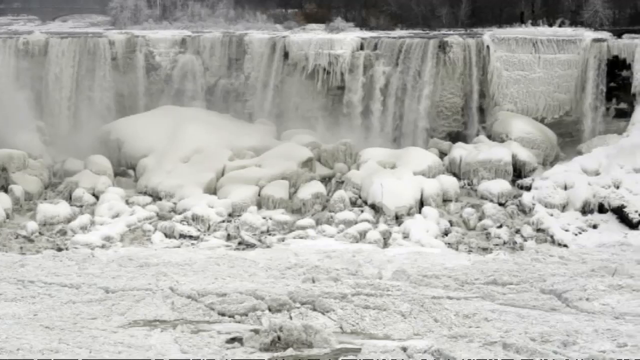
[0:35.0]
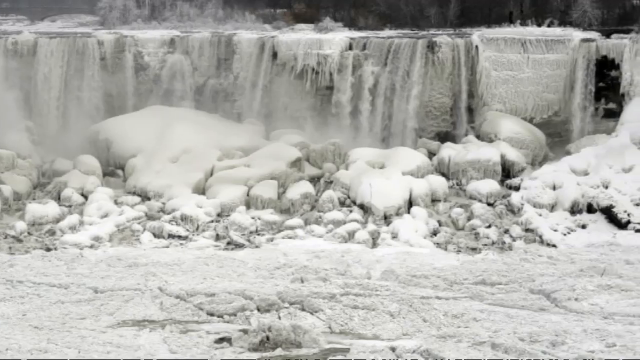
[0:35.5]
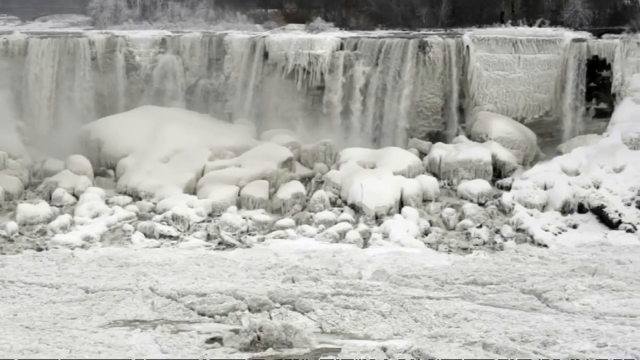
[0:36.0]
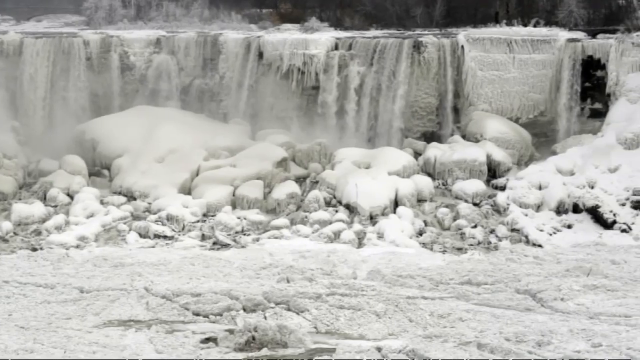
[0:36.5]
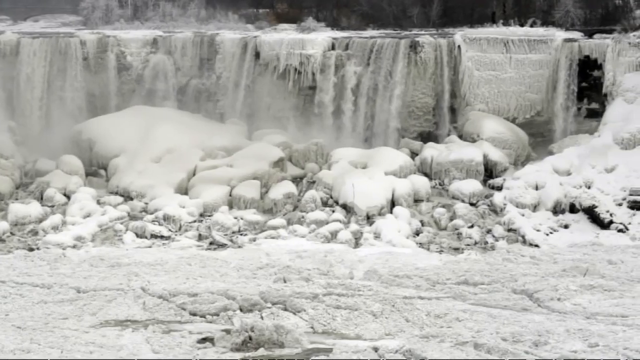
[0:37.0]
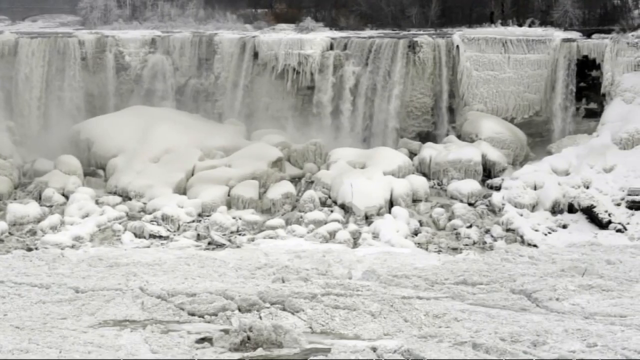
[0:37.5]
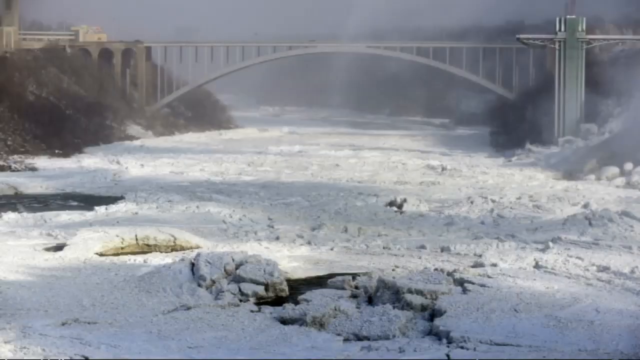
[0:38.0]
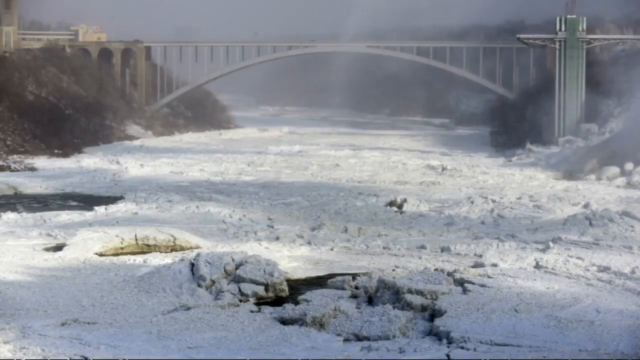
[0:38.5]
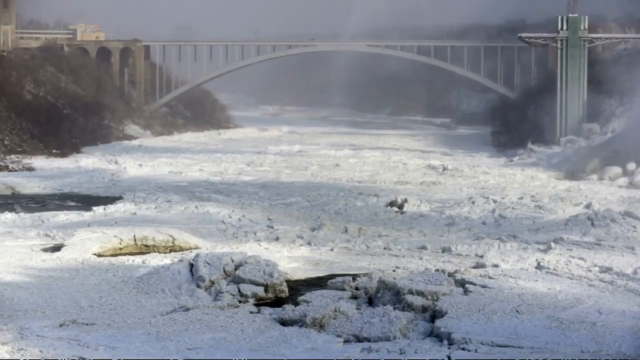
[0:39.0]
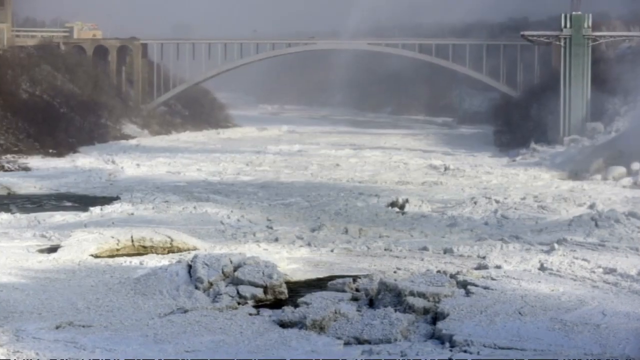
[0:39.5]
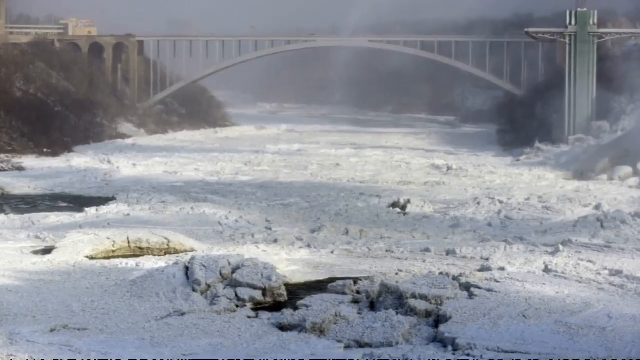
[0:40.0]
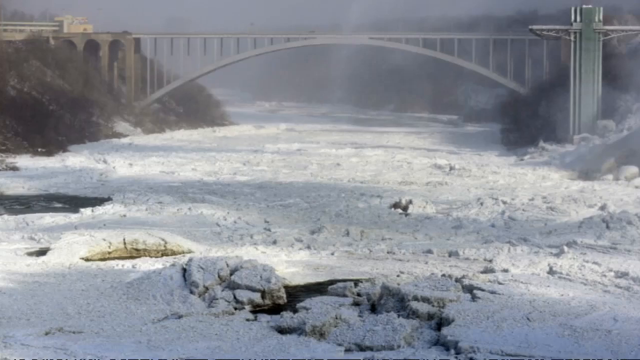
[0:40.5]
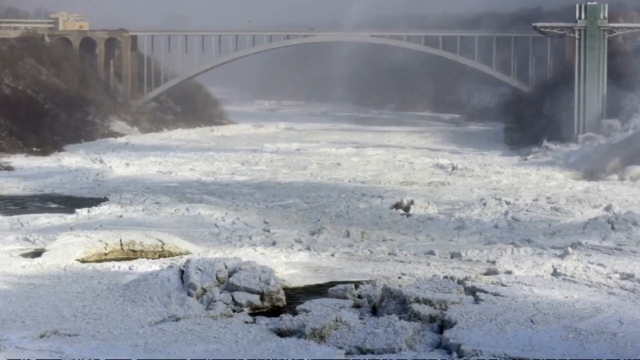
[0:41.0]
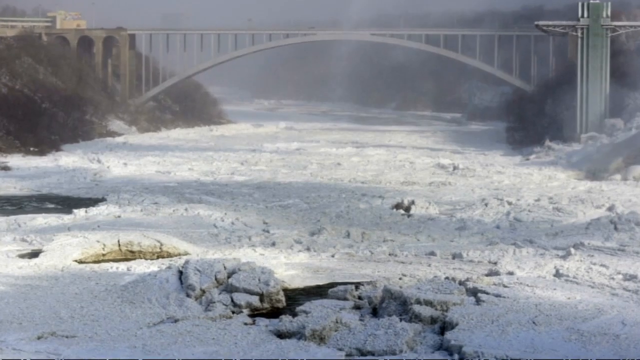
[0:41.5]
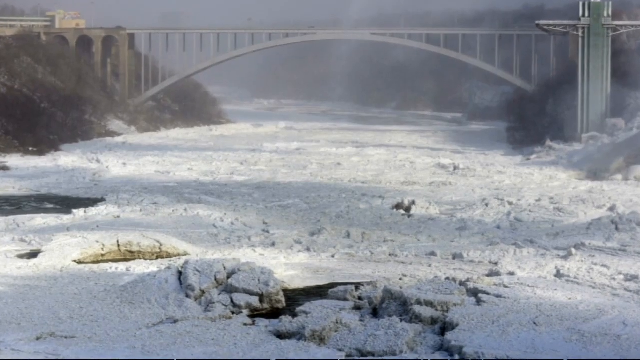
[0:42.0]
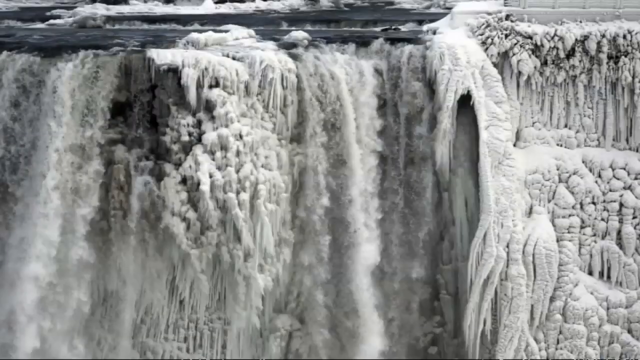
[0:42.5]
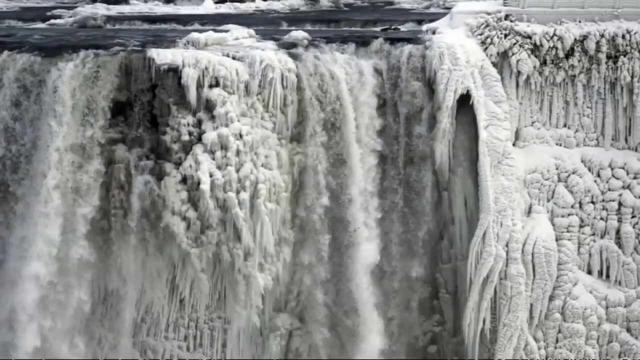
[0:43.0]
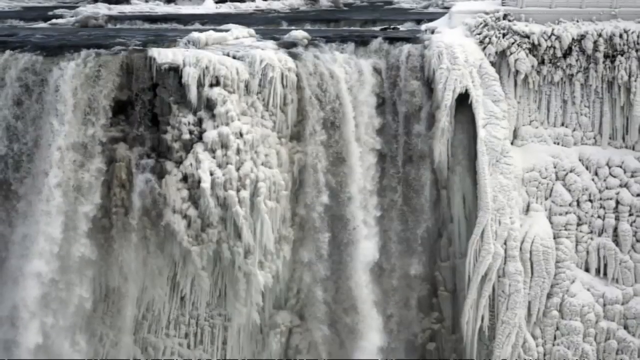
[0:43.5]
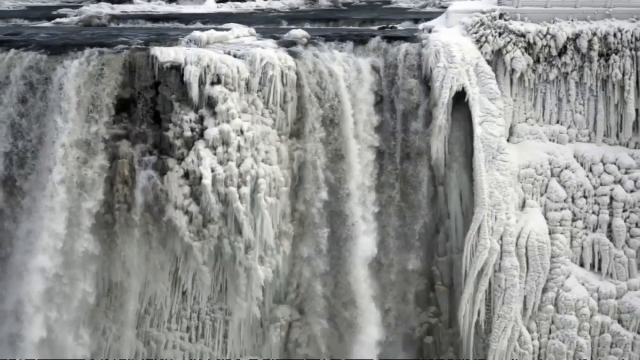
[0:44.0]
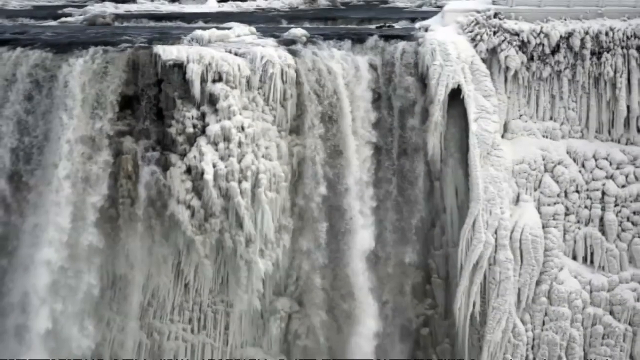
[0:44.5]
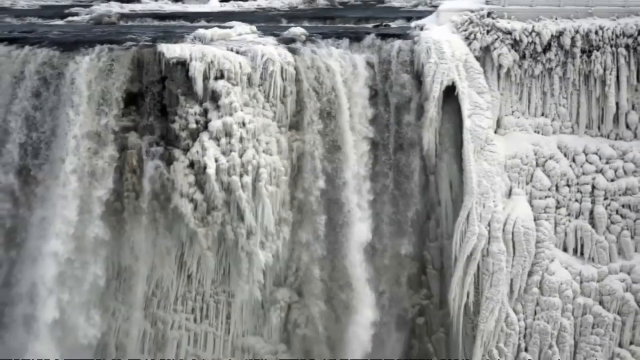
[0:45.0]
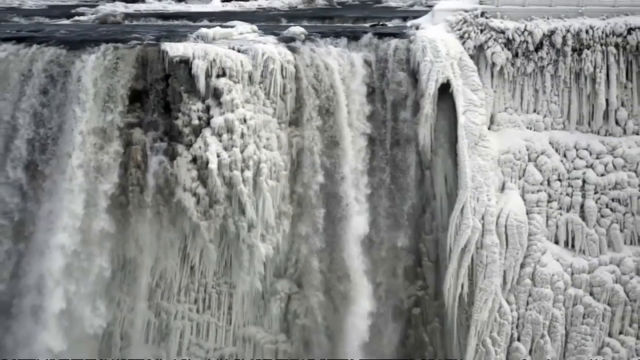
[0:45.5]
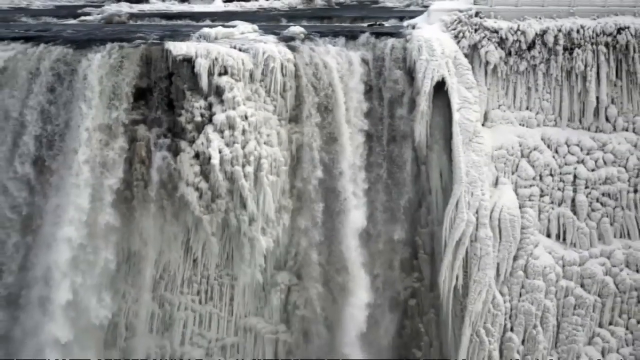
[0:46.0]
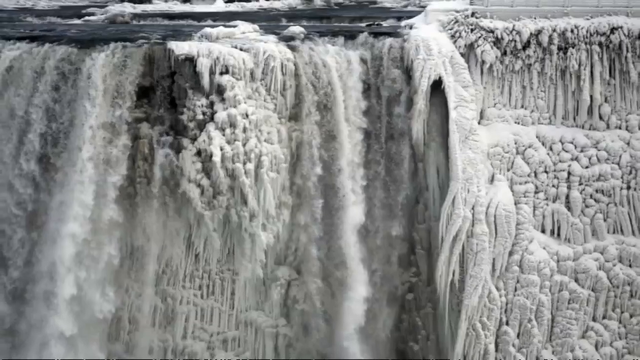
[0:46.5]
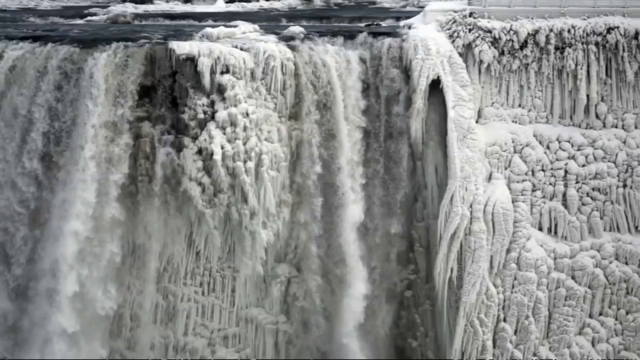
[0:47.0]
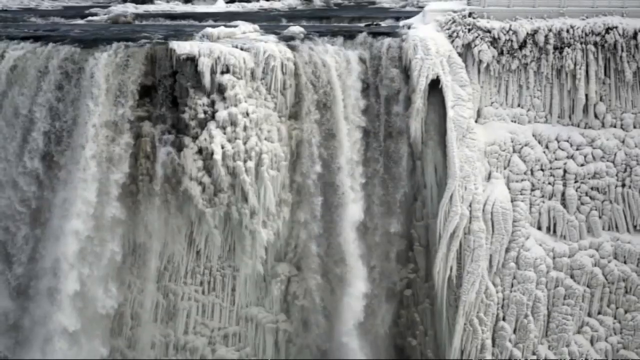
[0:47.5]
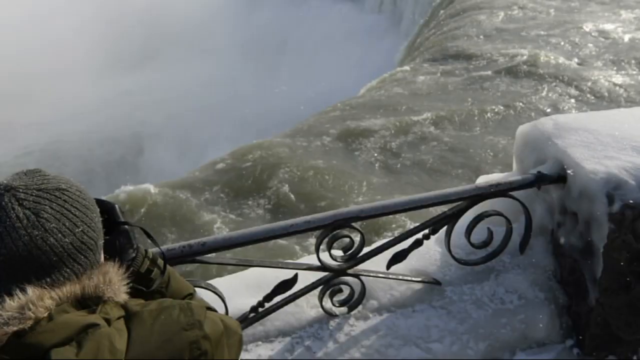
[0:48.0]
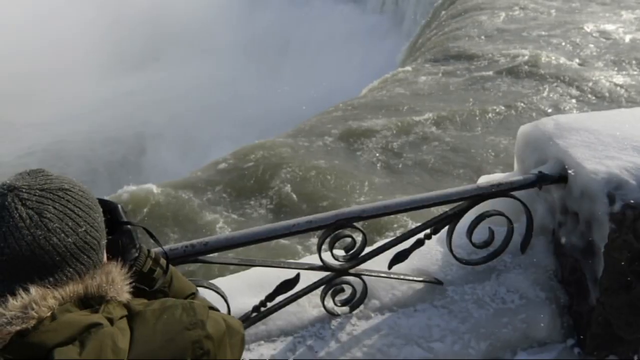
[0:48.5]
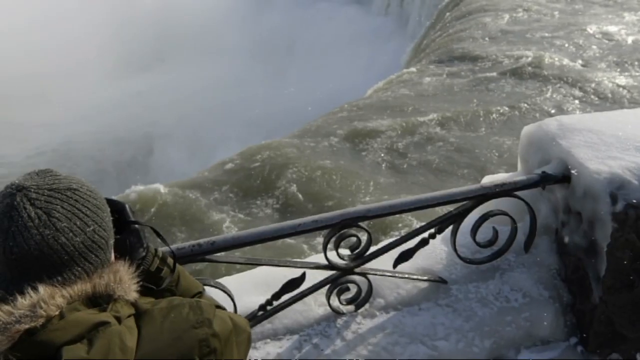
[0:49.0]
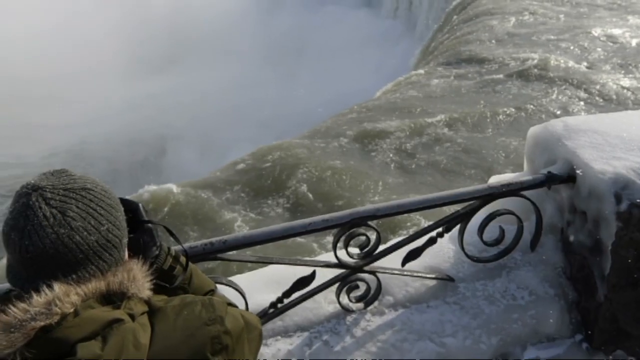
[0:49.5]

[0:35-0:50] The cracked frozen landscape appears, along with a bridge over what is apparently a lake or water that is frozen over. A shot shows what appears to be Niagara Falls frozen midstream, followed by another shot of the people looking over at it, then the ledge and the bridge. There are cracks up front, and the distance is foggy. The waterfall is shown with everything frozen mid-cascade, and then someone in a green jacket looks over the waterfall with a phone camera from a different perspective. The bridge returns; the scene is grey, with apparently some green foliage to the left of the image where it connects the two spaces. A person apparently looks over a black railing into the abyss. A misty cloud hangs in the area around the bridge, and the cascading waterfall shows what seems to be a top ledge where it first falls over. Another perspective of the same area shows the person looking over it, apparently with a feathered hood on their green jacket. There is a lot of black ice toward the top of the image, the black railing is covered in ice, and there is ice toward the right of the image along with packed snow that seems very fresh. In the bottom right corner is a logo reading "ODN" in a red square, with "OD" in white and "N" in black.